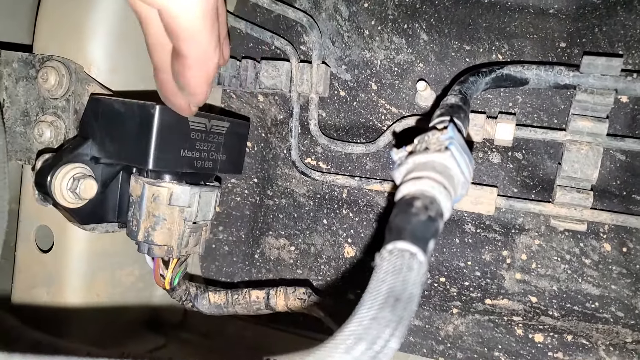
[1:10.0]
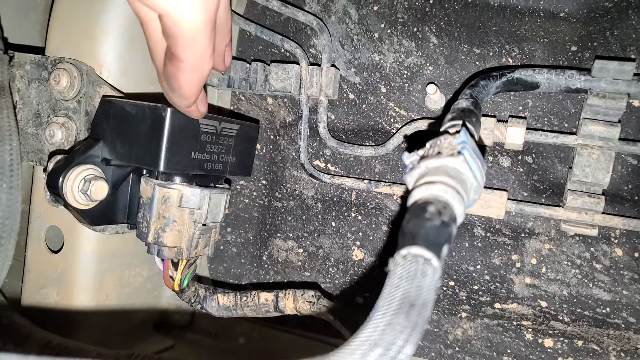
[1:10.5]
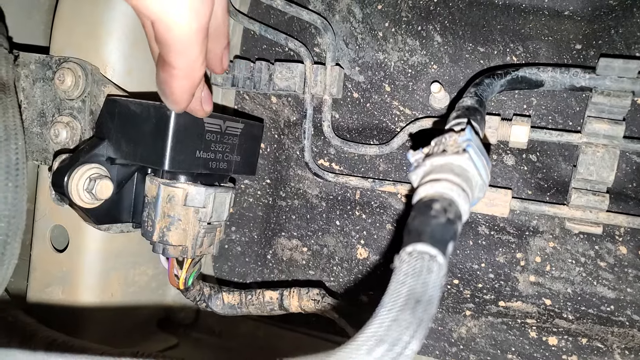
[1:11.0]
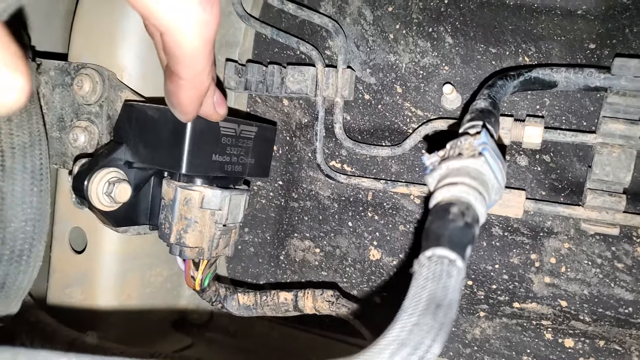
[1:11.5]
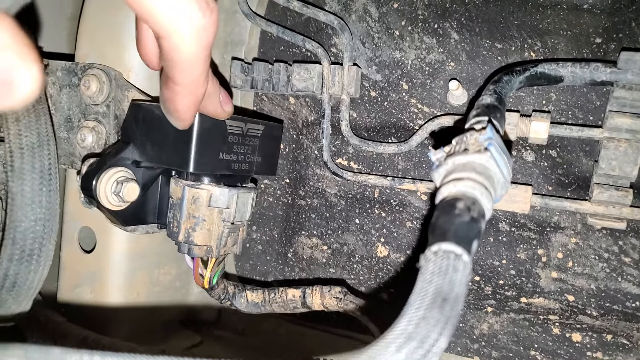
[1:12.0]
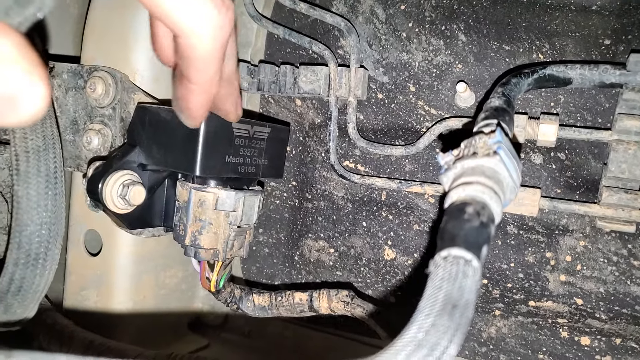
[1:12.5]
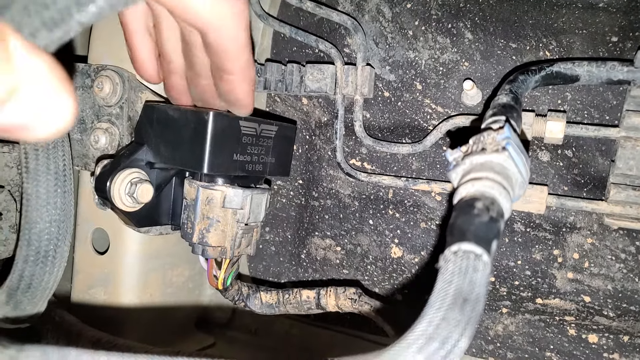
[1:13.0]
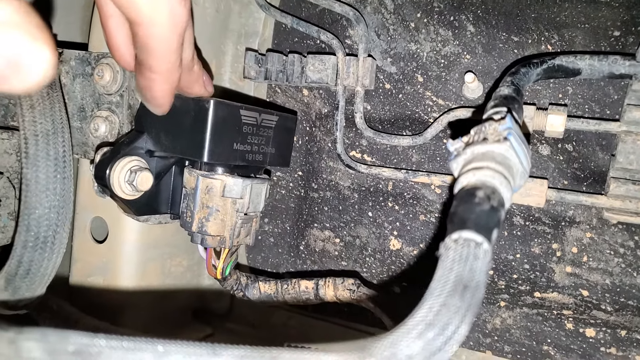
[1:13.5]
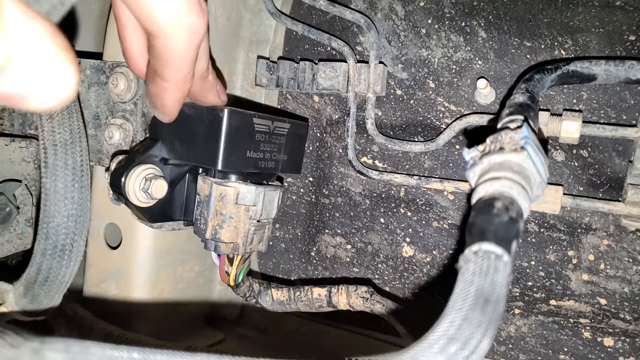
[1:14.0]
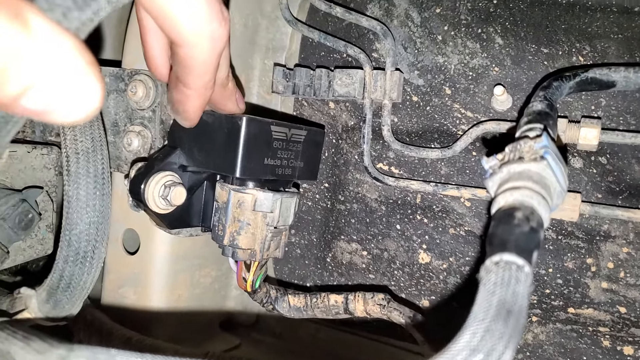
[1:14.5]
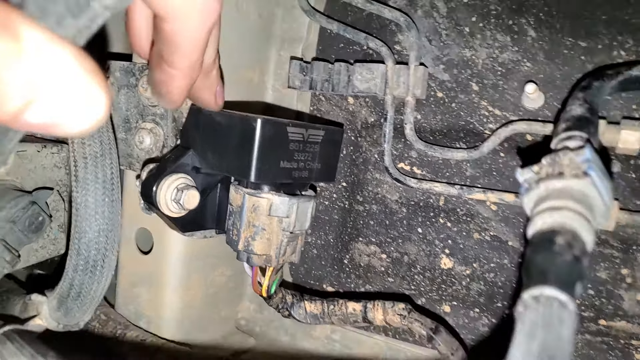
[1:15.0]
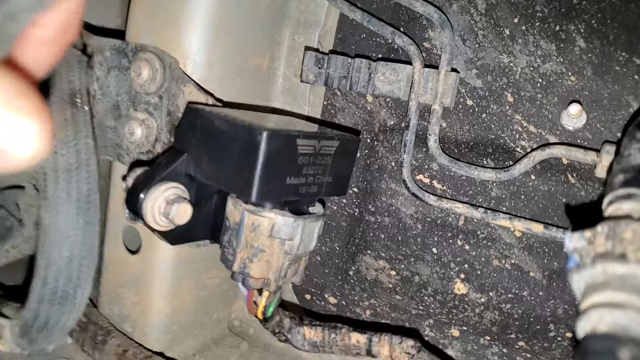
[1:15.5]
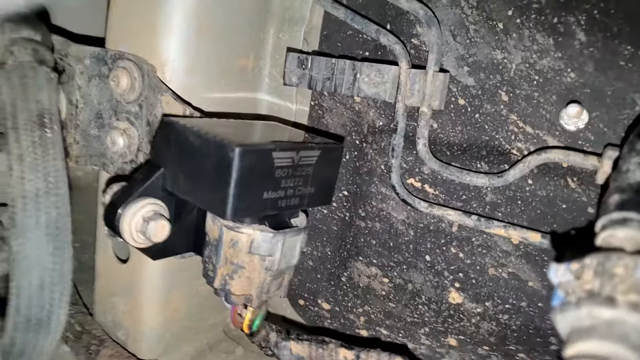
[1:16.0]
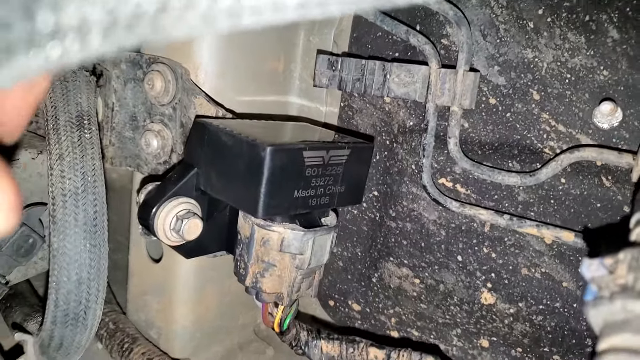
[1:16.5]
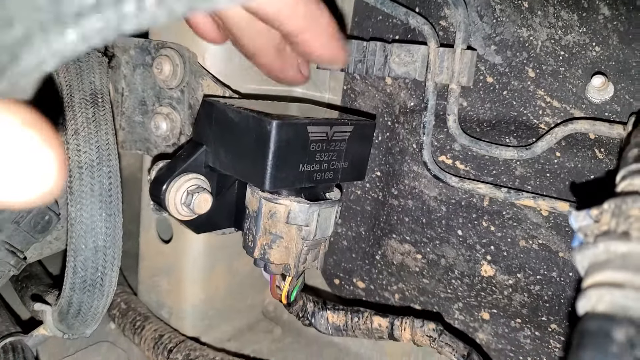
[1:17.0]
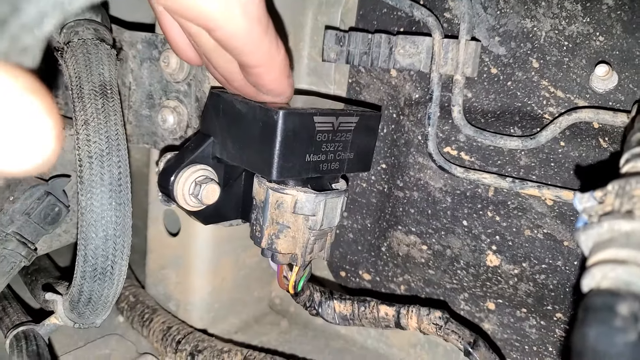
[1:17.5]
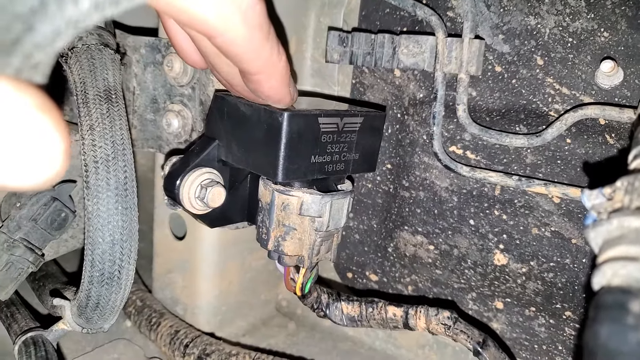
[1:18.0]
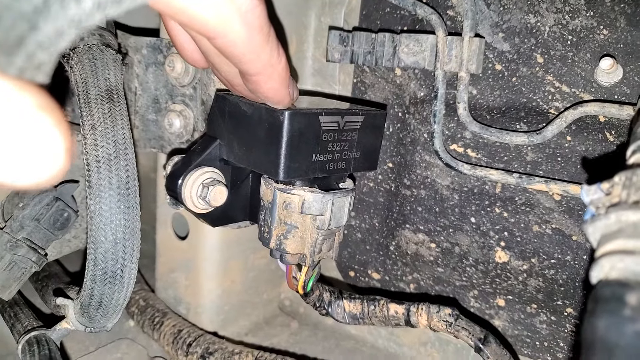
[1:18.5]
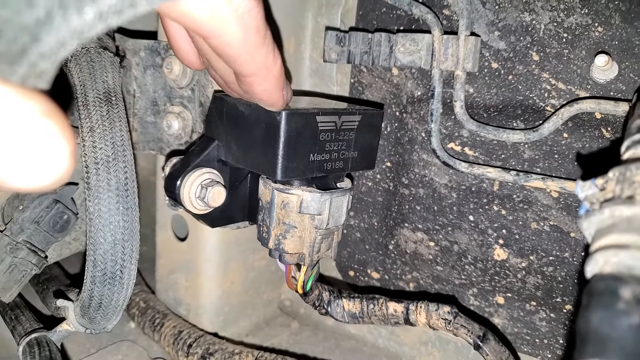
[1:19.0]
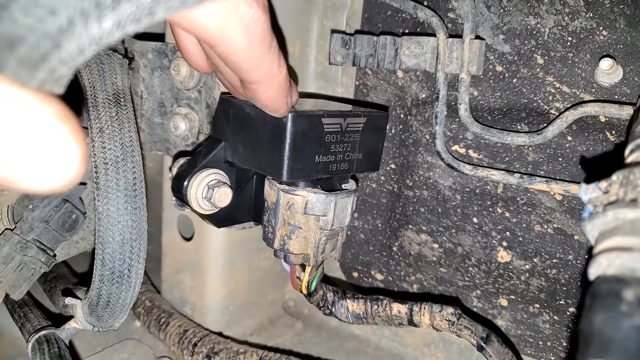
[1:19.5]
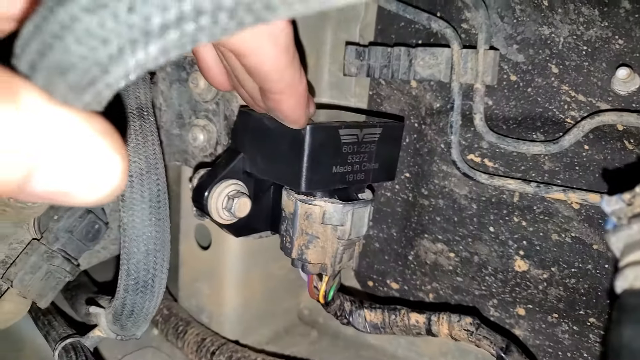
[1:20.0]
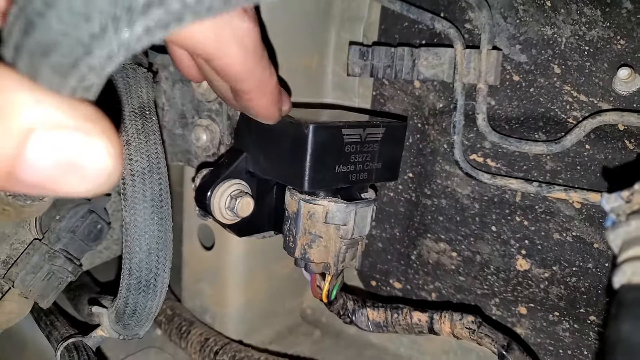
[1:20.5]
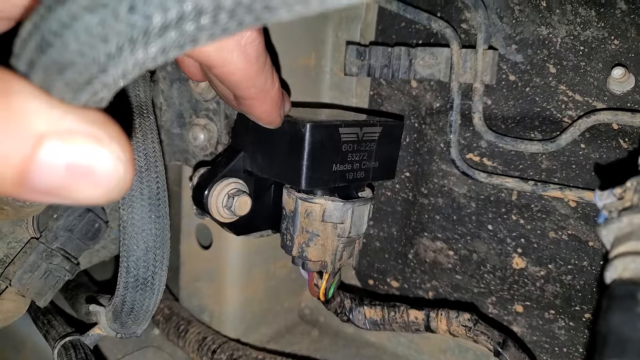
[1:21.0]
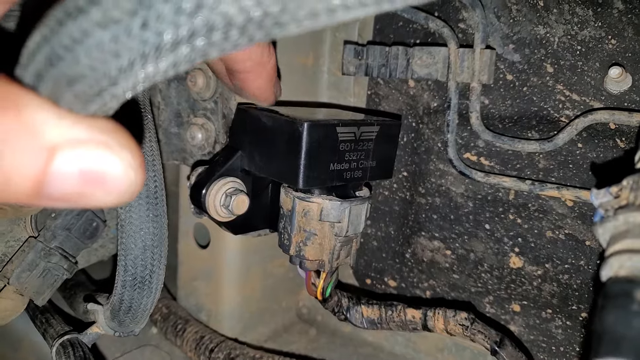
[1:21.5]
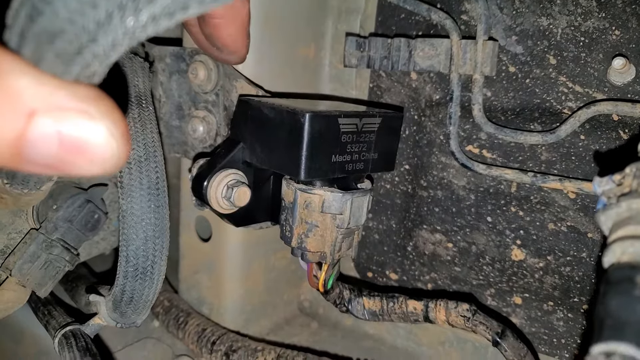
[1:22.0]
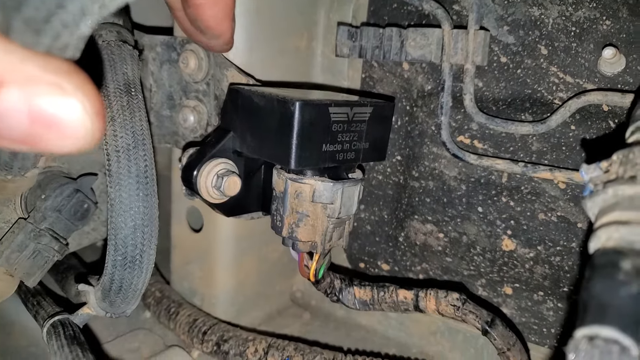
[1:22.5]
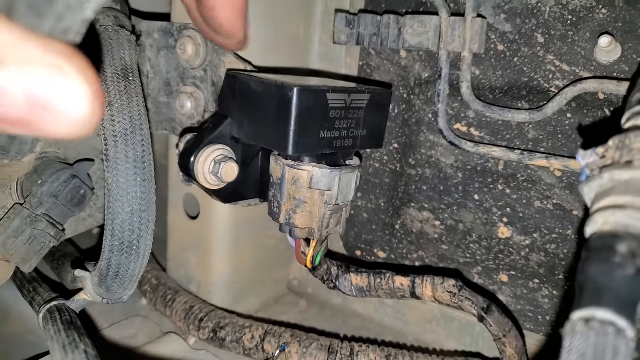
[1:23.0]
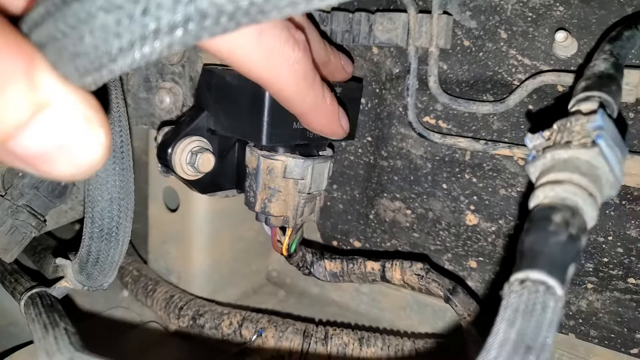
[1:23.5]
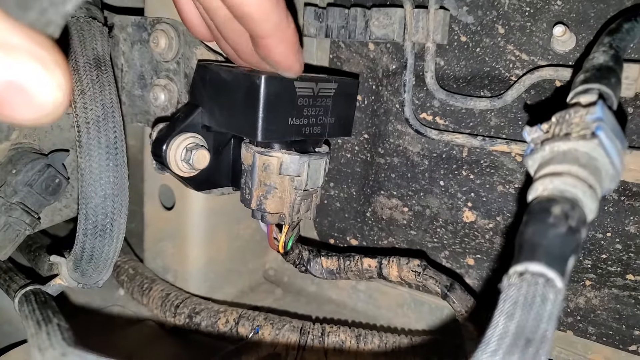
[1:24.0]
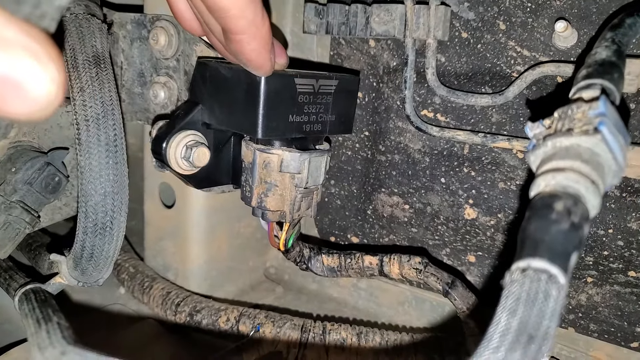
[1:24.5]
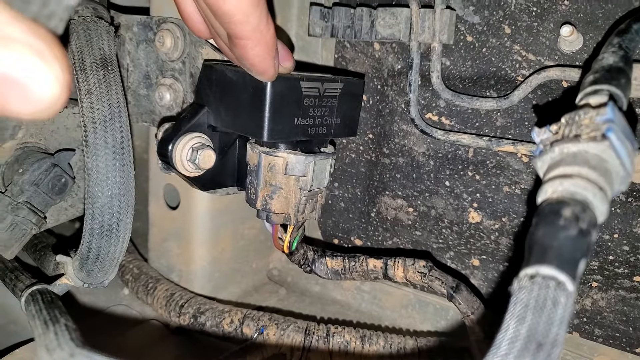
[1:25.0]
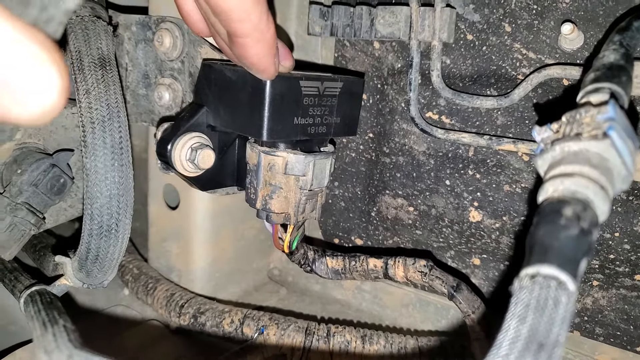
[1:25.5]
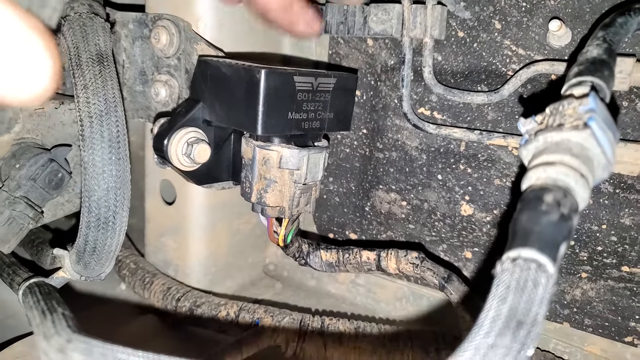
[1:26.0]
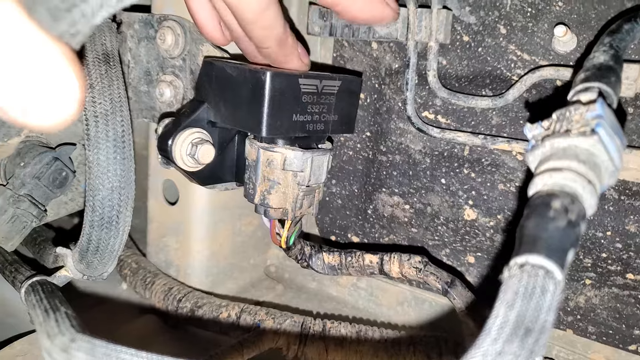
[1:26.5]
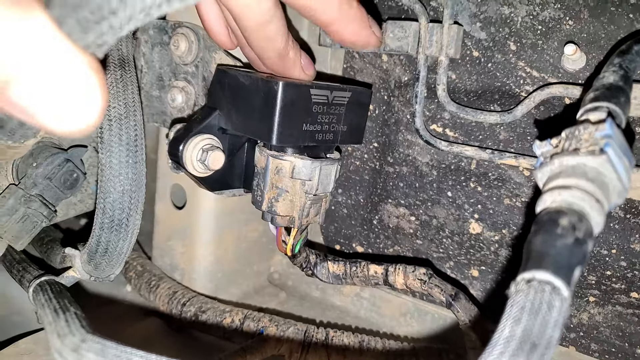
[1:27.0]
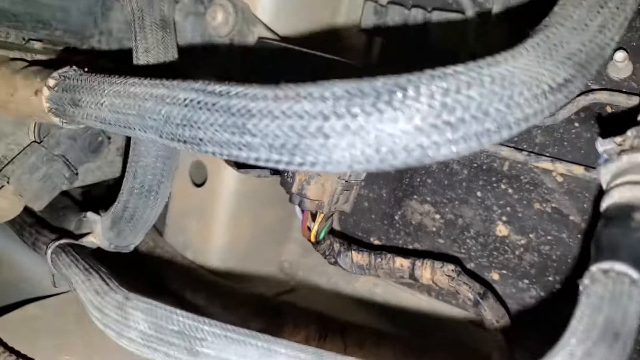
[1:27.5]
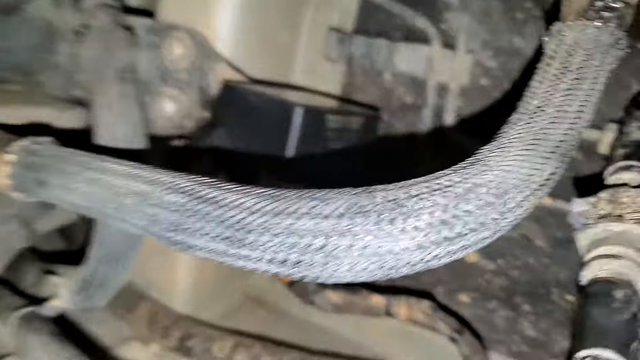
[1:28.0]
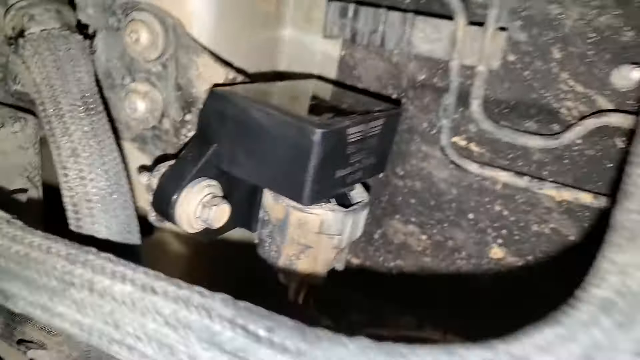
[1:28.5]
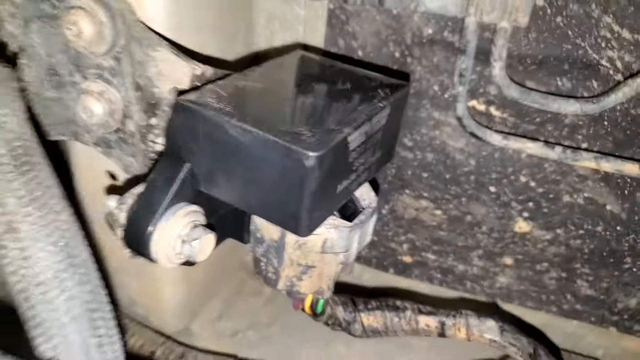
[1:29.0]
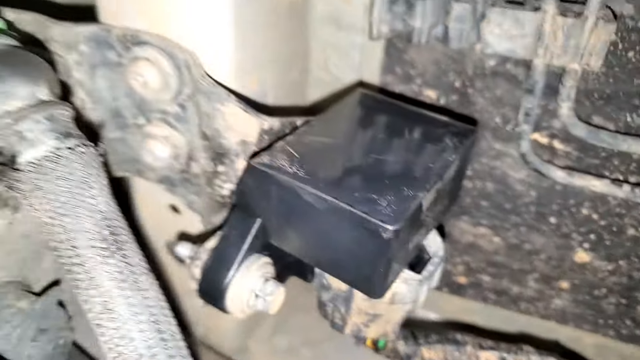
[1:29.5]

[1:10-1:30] A person uses their left hand to touch a black plastic piece of a car part. It has light gray lettering and numbers on it, a logo in the same light gray, and the words "Made in China". The person taps the piece twice, and the third time leaves their fingers on it for a moment. They withdraw their fingers, press and rub against the piece, and then tap it again. After the final tap, the view looks at the piece more from above. It is attached to a white nozzle at its bottom, and a white painted screw attaches it to another part that looks to be made of metal, in a white metallic color. More black pieces are toward the right side of the camera angle.